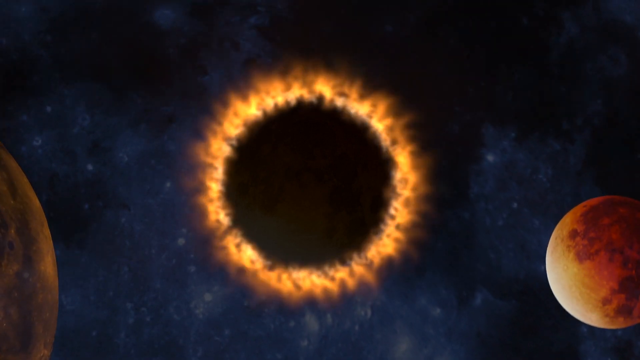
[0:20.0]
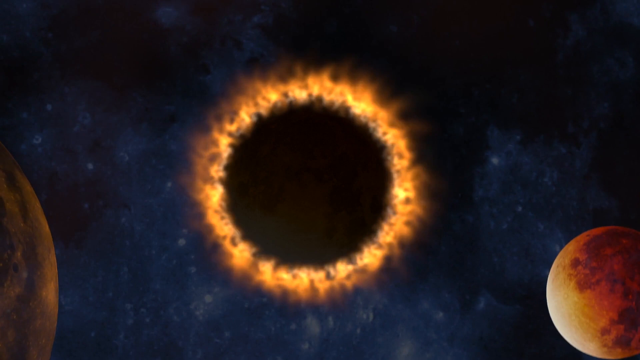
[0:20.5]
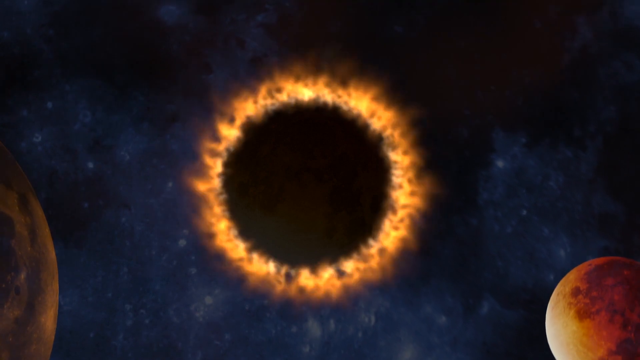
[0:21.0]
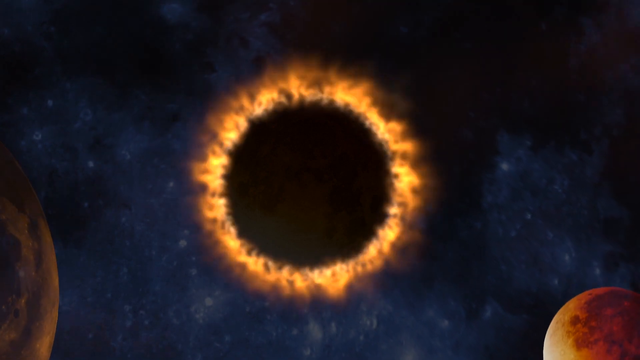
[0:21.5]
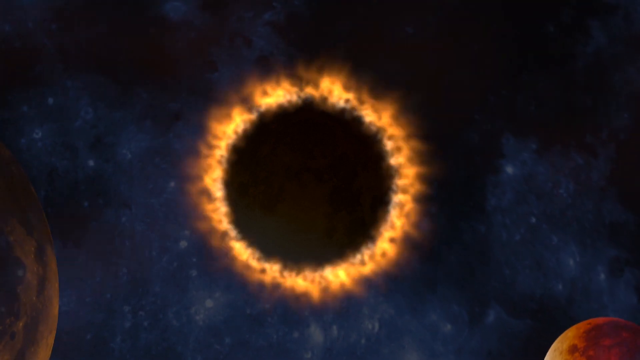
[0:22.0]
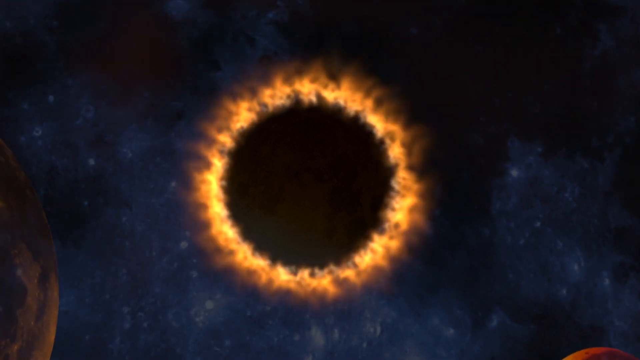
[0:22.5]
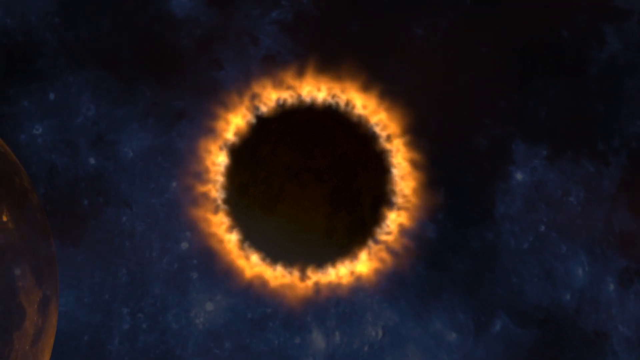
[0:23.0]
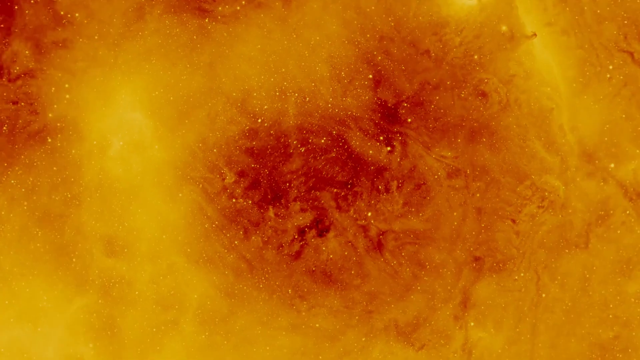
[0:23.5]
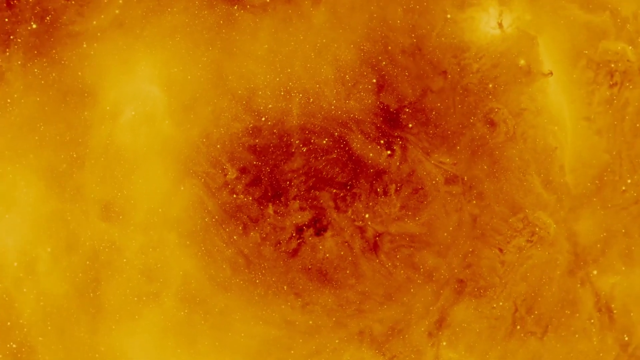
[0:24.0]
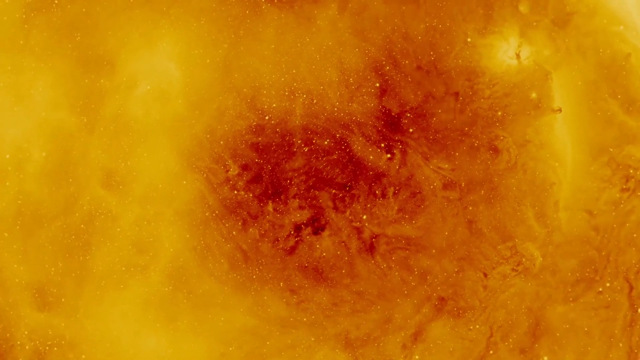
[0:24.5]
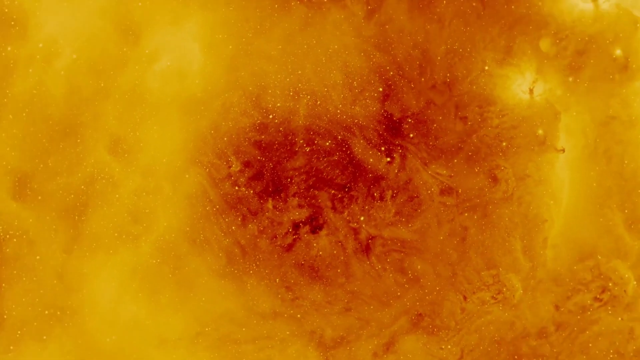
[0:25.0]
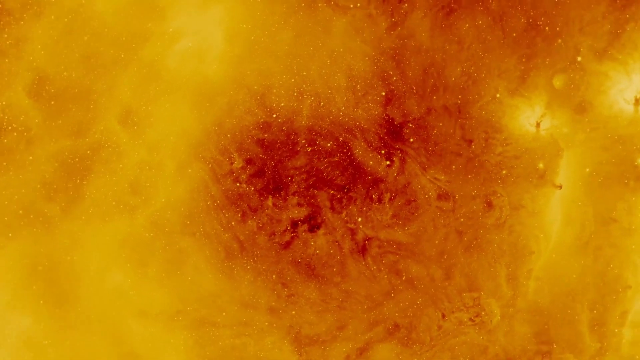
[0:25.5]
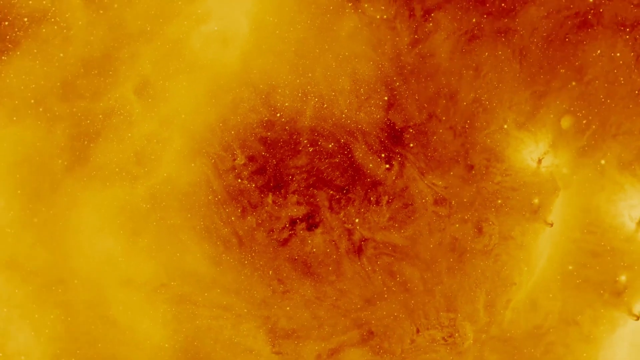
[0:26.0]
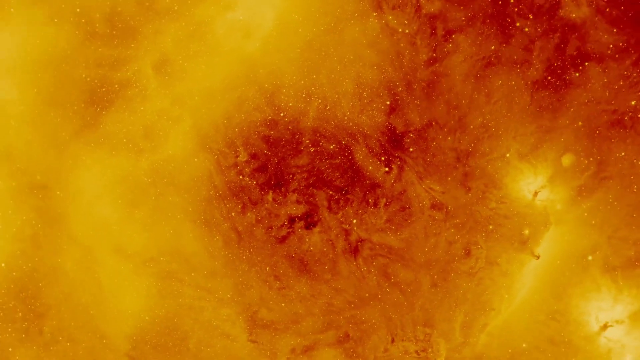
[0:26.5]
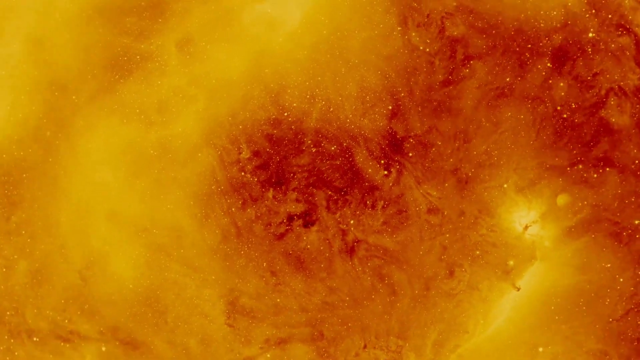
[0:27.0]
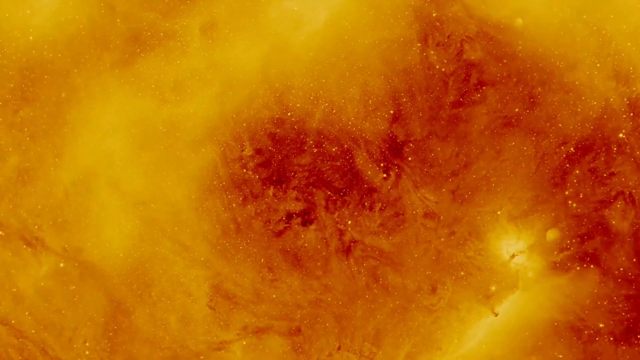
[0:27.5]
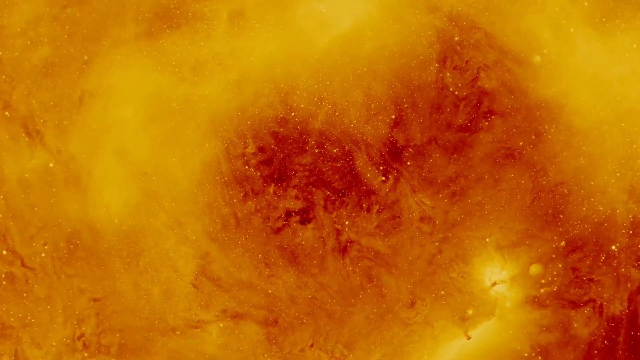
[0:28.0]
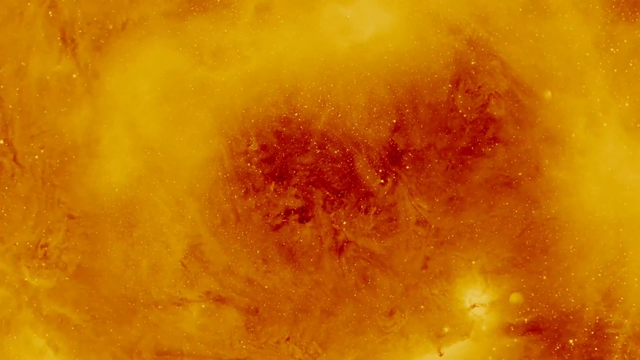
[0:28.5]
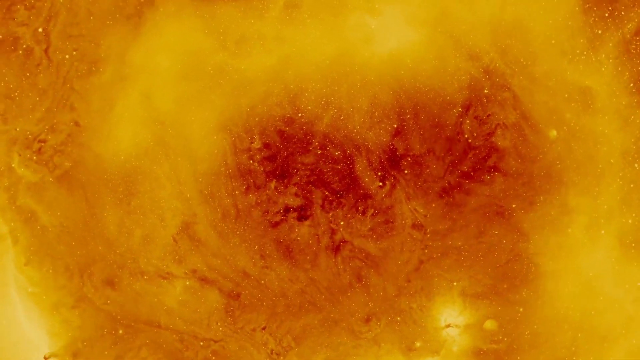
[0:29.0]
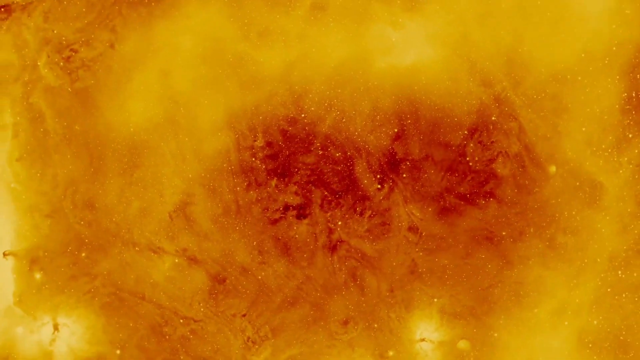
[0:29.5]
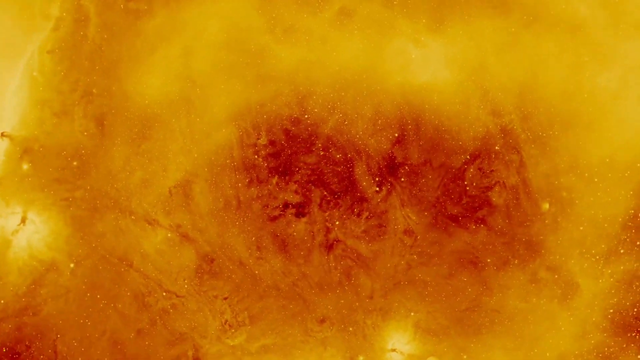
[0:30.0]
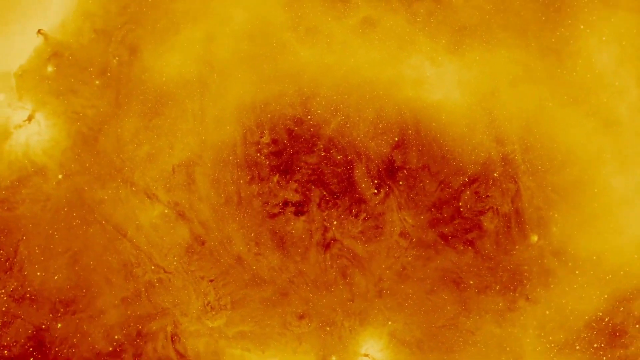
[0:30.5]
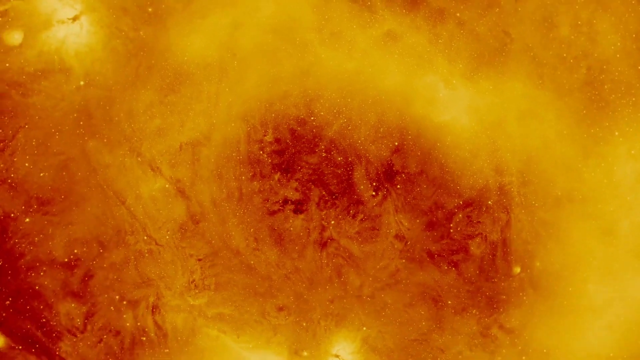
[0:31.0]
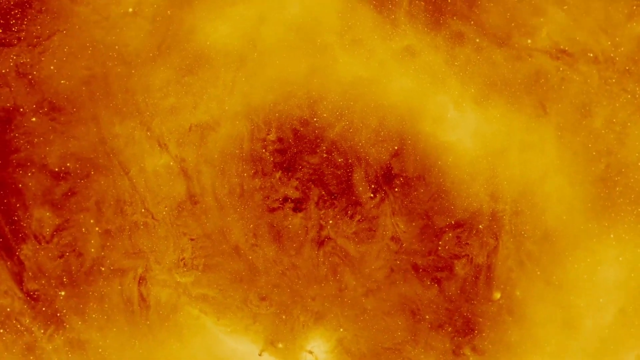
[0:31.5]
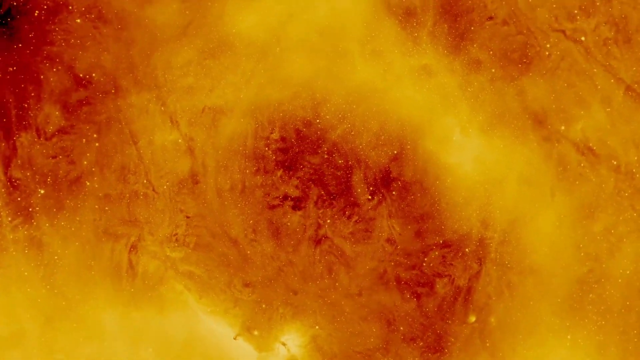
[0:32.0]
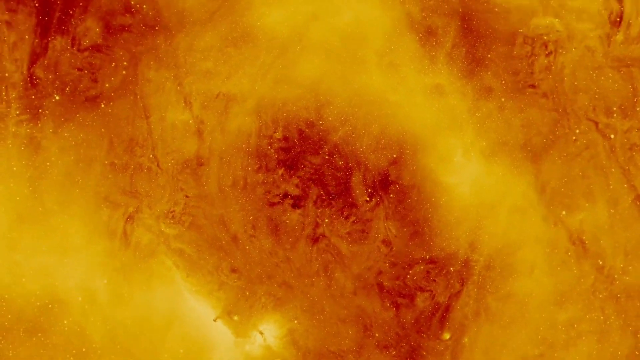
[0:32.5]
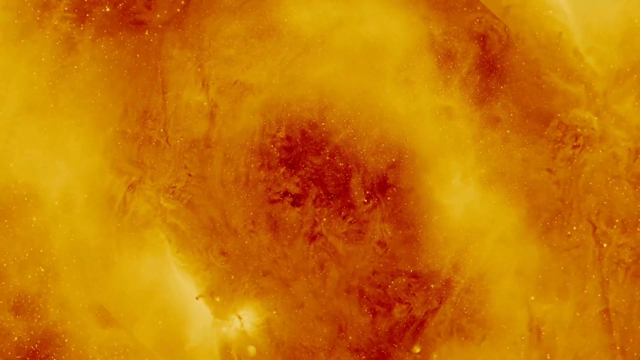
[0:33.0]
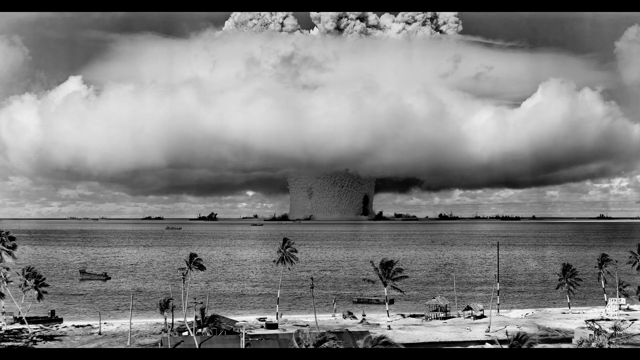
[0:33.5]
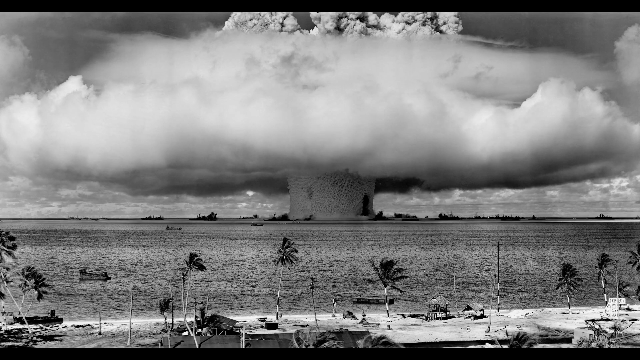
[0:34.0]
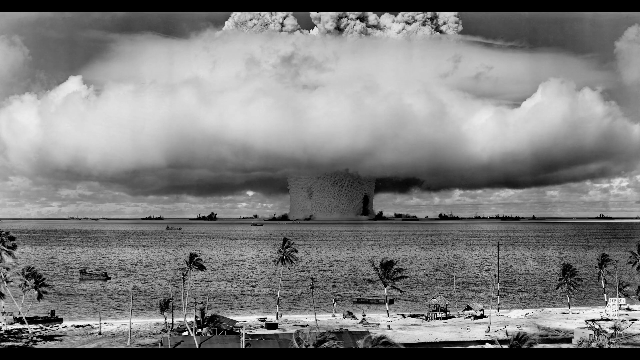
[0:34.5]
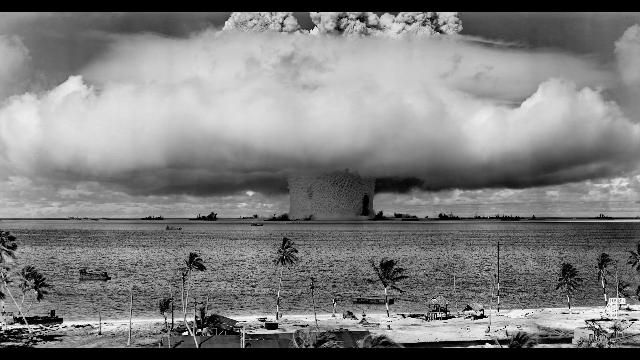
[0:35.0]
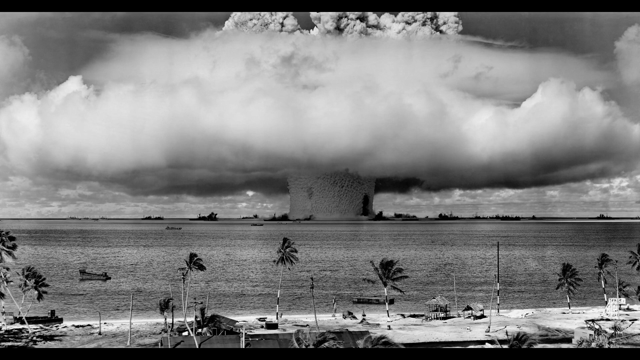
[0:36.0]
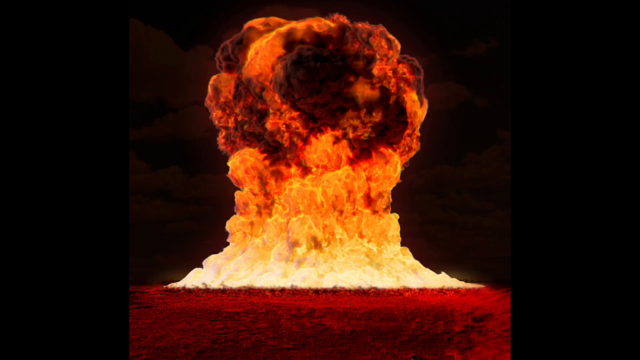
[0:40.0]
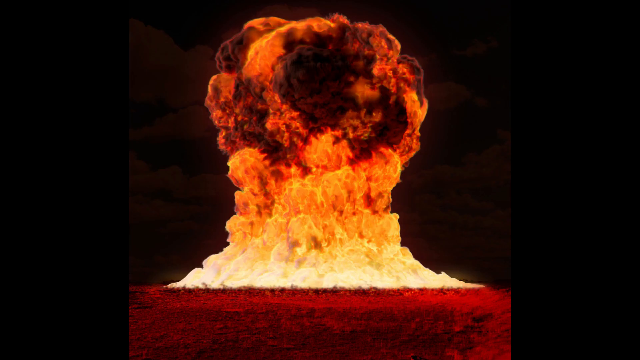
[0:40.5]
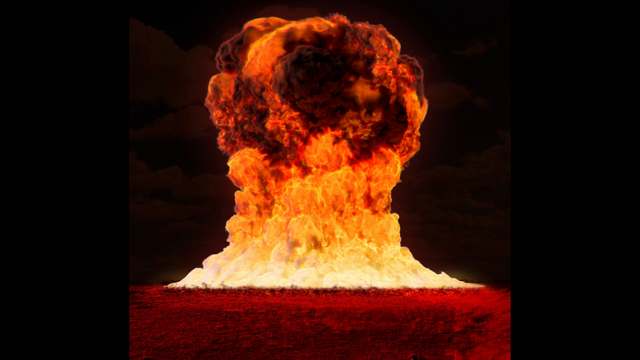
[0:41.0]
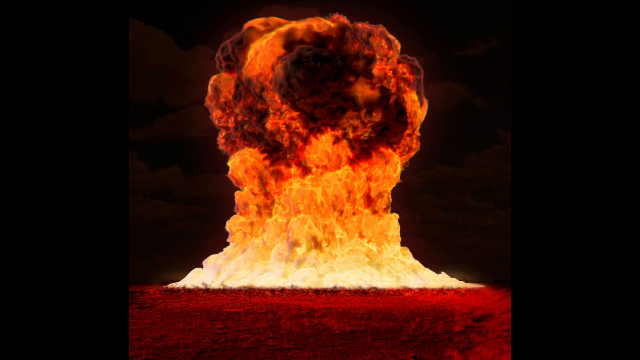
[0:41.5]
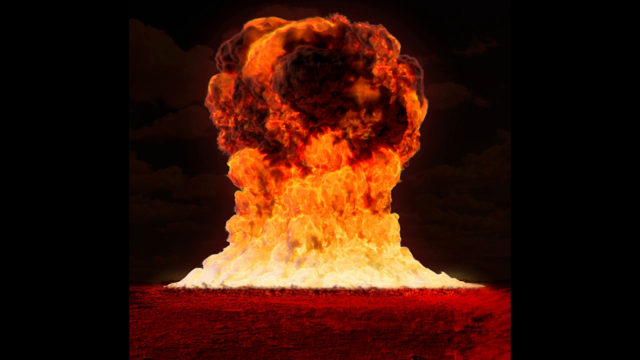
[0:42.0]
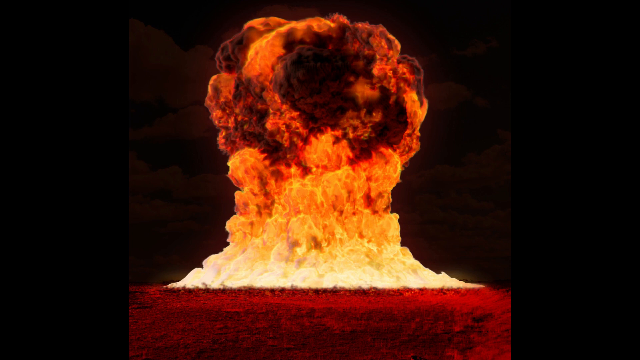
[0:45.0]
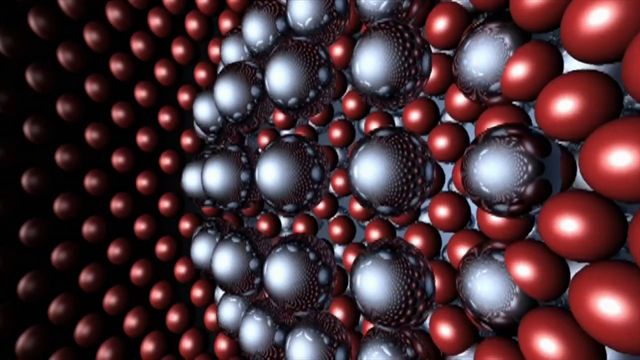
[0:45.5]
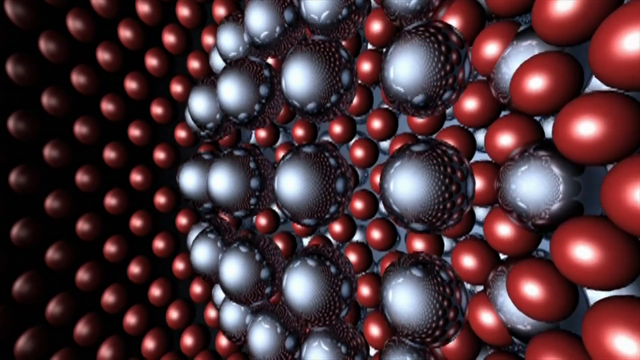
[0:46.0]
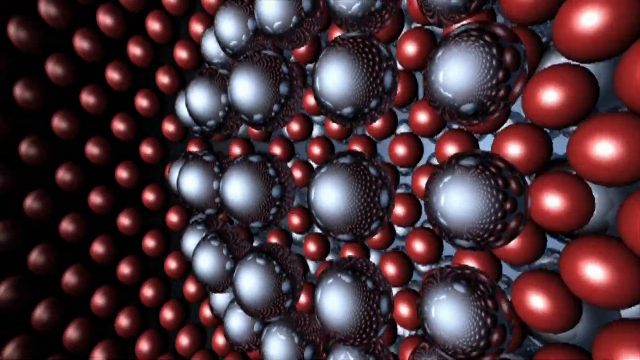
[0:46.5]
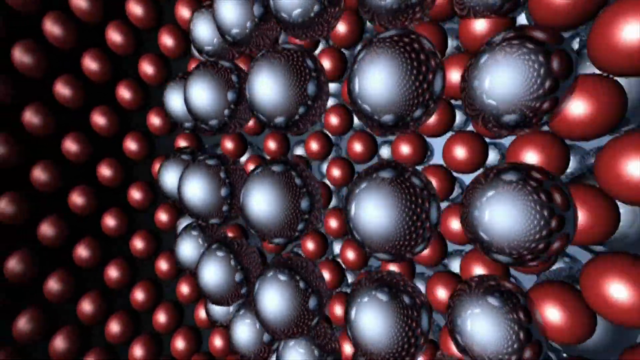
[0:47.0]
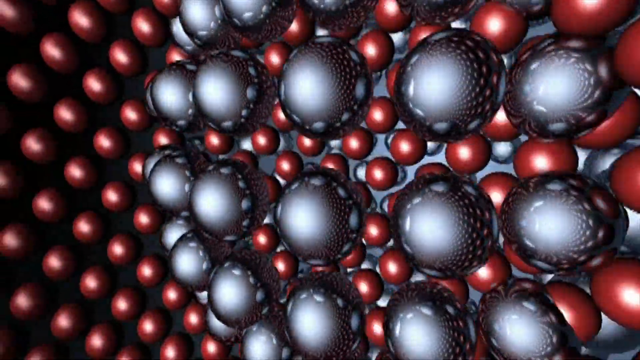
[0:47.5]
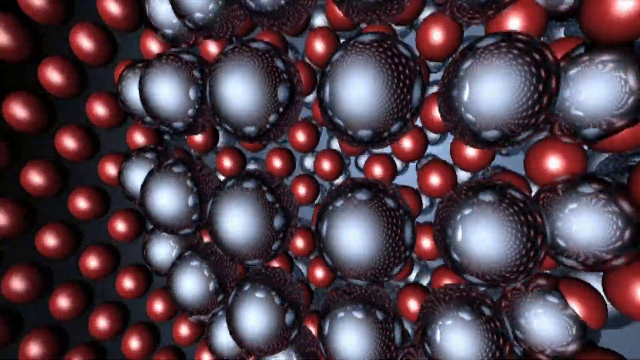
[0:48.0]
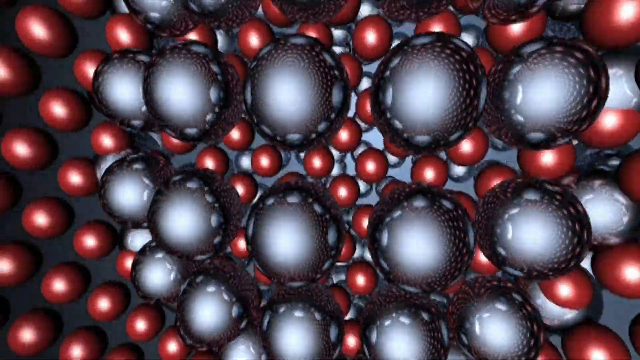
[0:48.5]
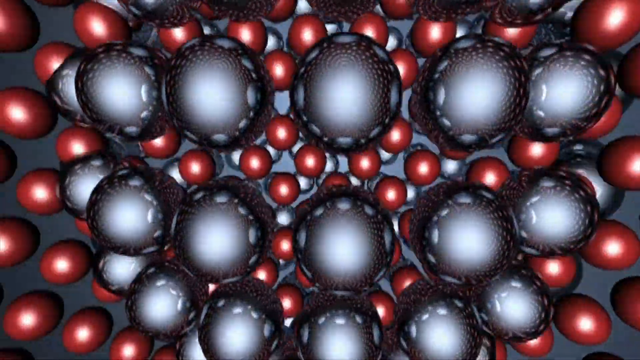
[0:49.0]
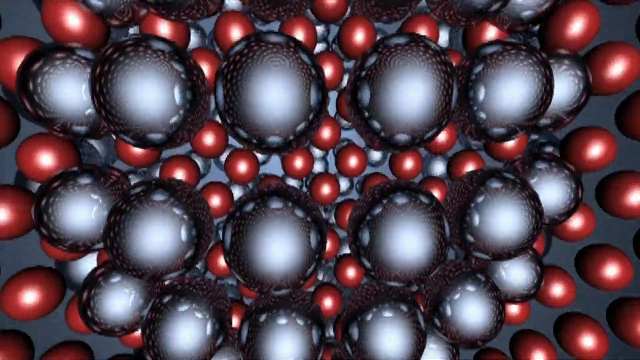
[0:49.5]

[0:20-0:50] The space scene continues against a very dark blue, almost black background with a few scattered white stars. In the center is a big black circle with red, yellow and white flame kind of pulsating around its outer edges. In the bottom left, angling up and off the left side of the screen, is a small brown piece of a planet spinning clockwise. The yellow planet, having moved down from the top, is now near the bottom right corner and goes off the bottom of the screen. Next is an overhead, very close-up view of probably what the sun would look like: mostly red in the center, orange and yellow around the outside, kind of spinning in a clockwise circle as the view slowly pans out, so it looks almost three-dimensional, like looking down into a hole in the sun. Then a black and white photo shows a giant explosion: a little sky is visible at the top left, and a big billow of smoke spans from left to right, down about halfway from the top. Underneath it is a small stack that looks like a building that has been blown up, with land to the left and right in the far distance. Water extends down to a beach at the bottom with a few palm trees scattered about. The video cuts to a big explosion framed by black borders on the left and right. The ground is almost reddish, then there is yellow fire; as it rises almost to the top it turns orange, branches out a little, and becomes red, orange, dark orange and black, billowing up and getting darker as it rises. It then cuts to small circles like balls: red ones layered all the way across, and blue ones coming in from the right side, twisting and turning.